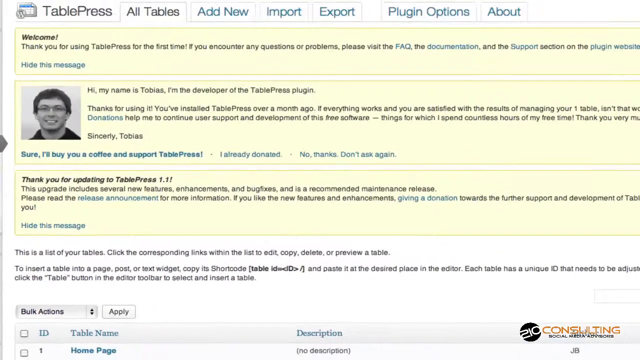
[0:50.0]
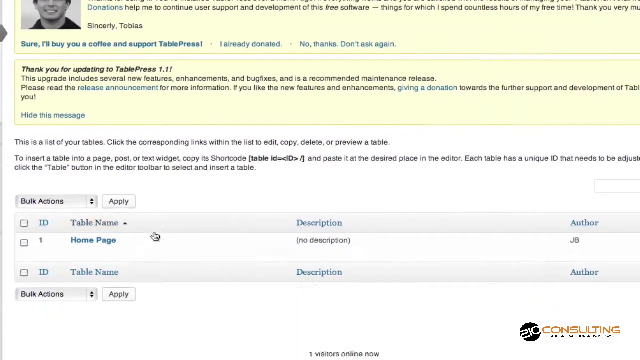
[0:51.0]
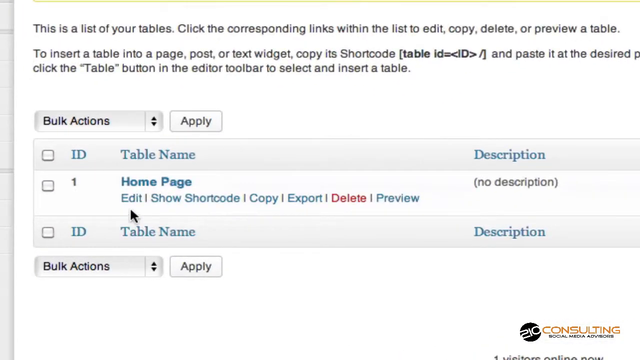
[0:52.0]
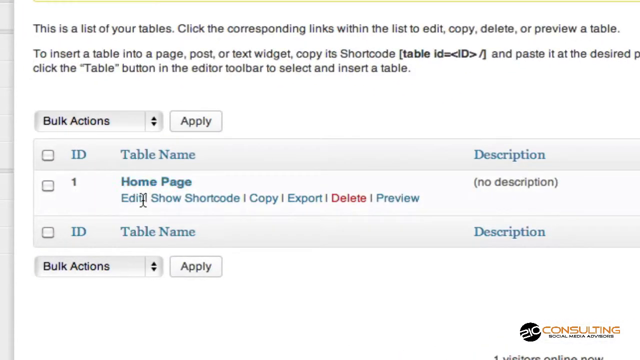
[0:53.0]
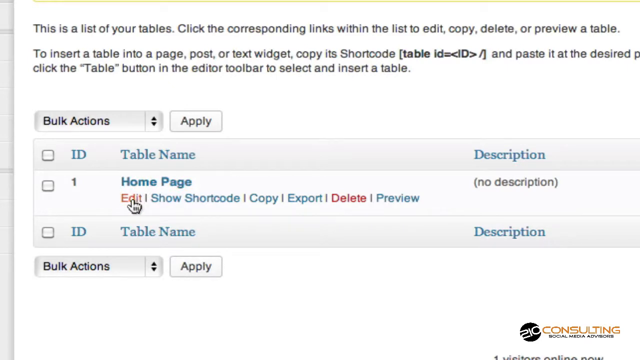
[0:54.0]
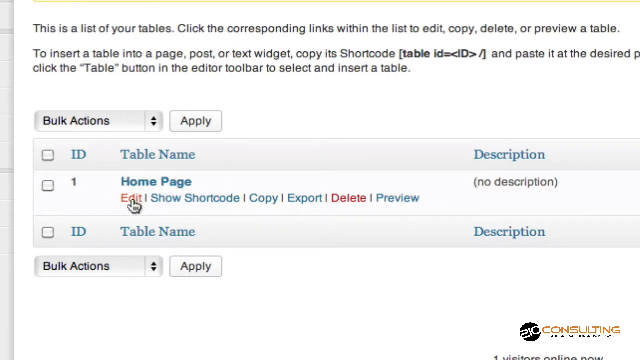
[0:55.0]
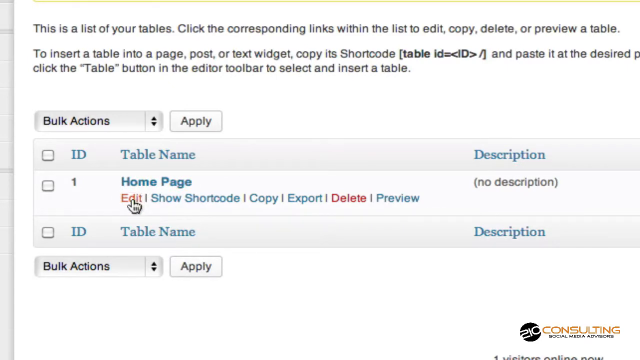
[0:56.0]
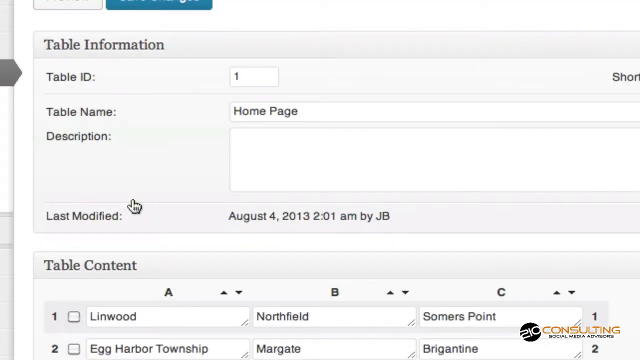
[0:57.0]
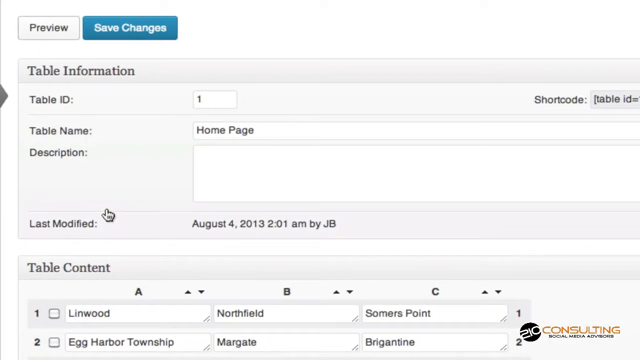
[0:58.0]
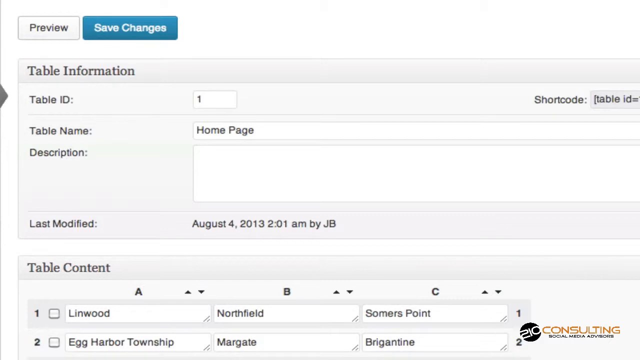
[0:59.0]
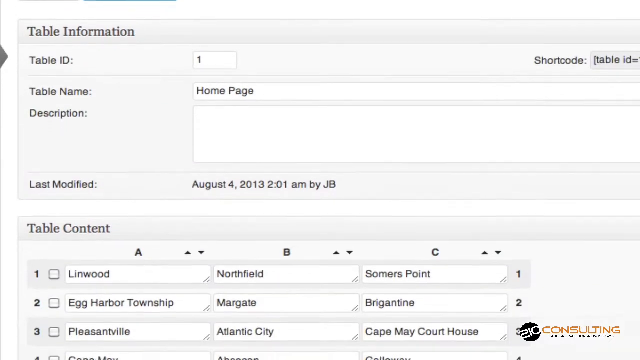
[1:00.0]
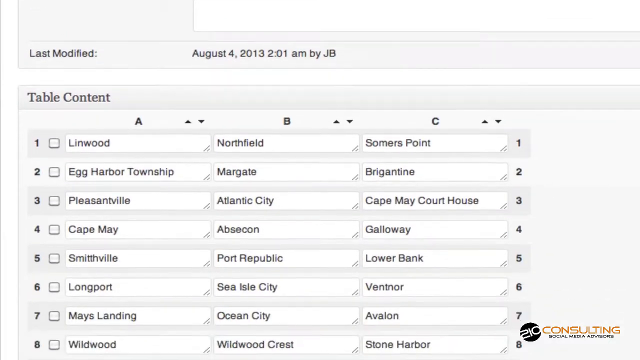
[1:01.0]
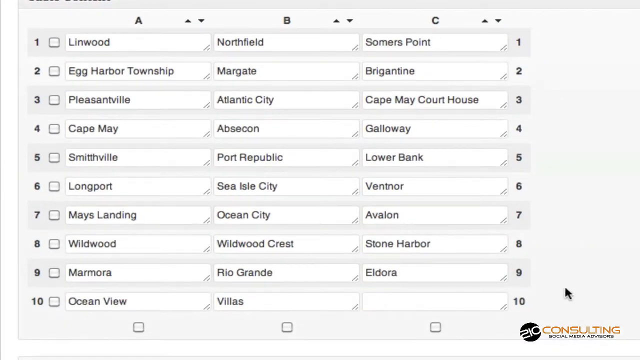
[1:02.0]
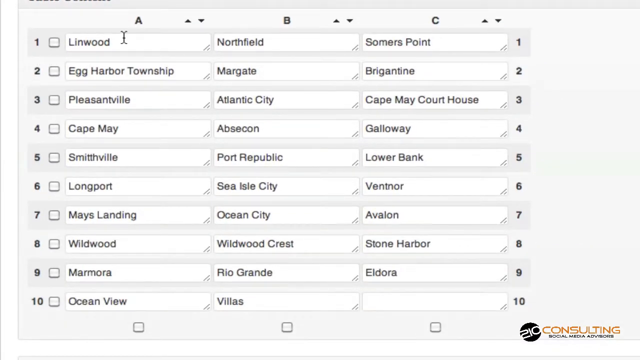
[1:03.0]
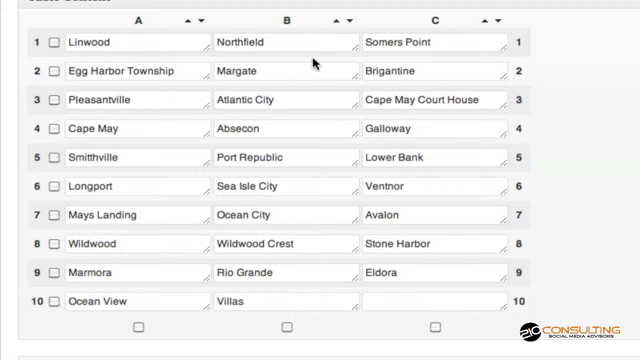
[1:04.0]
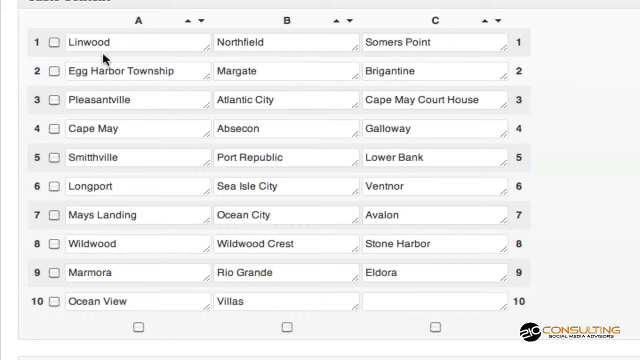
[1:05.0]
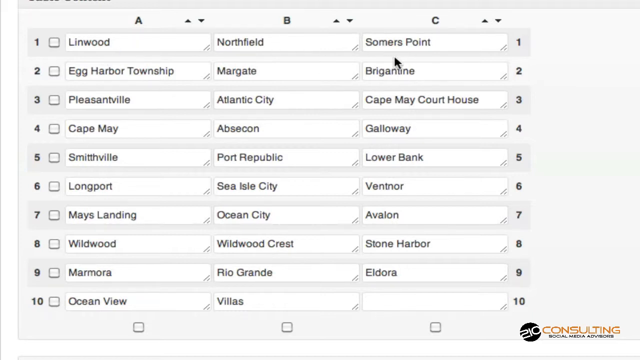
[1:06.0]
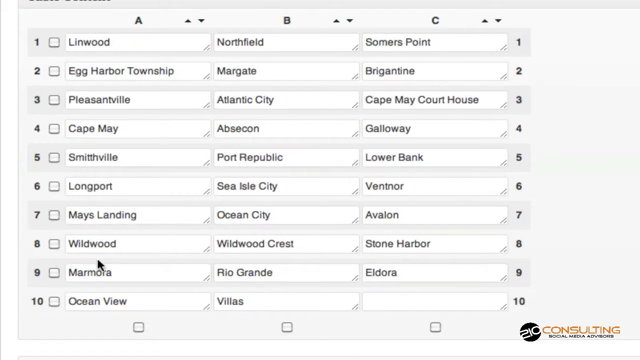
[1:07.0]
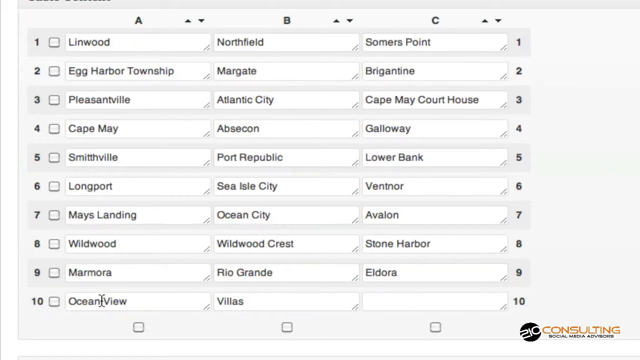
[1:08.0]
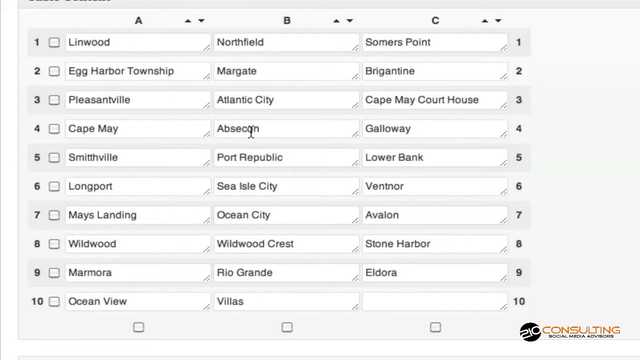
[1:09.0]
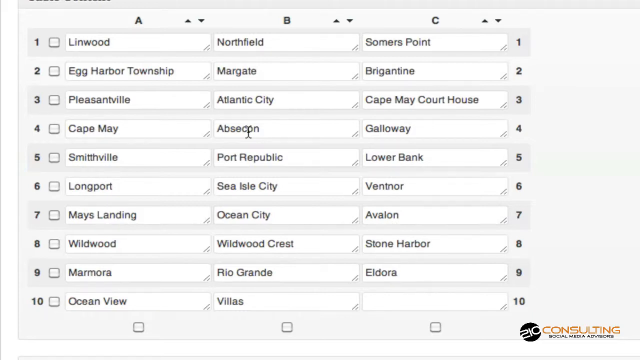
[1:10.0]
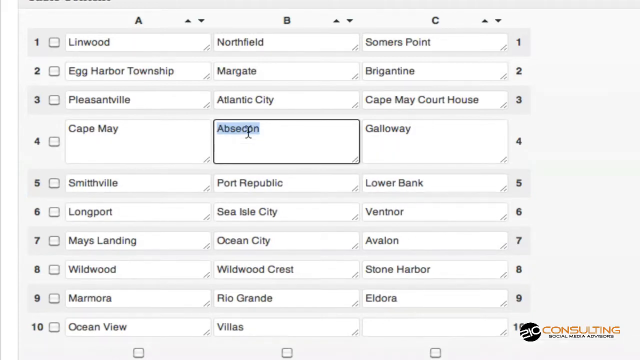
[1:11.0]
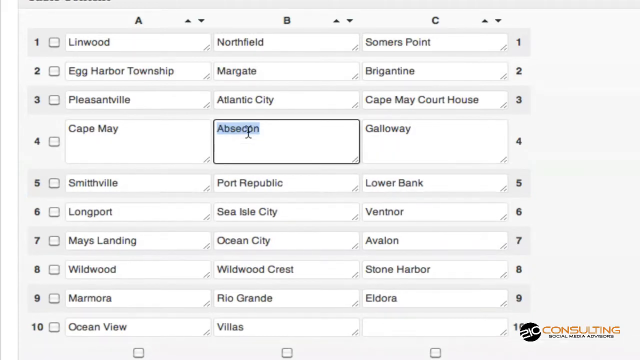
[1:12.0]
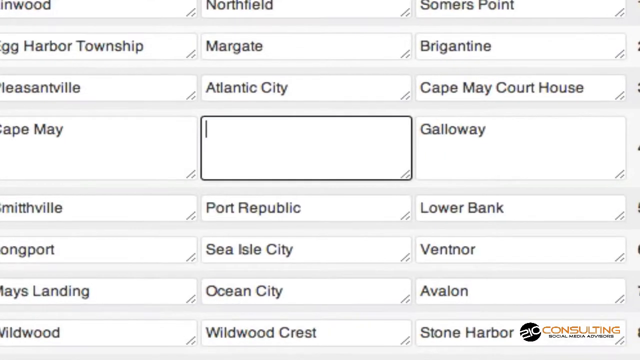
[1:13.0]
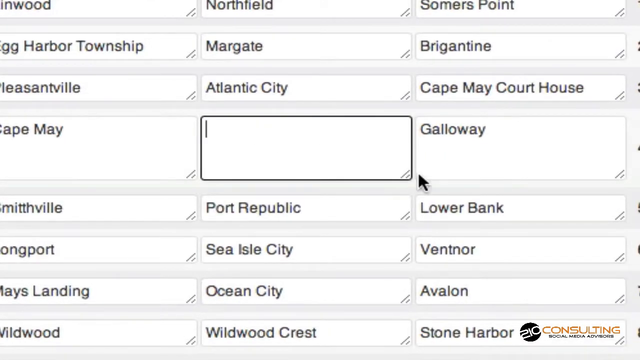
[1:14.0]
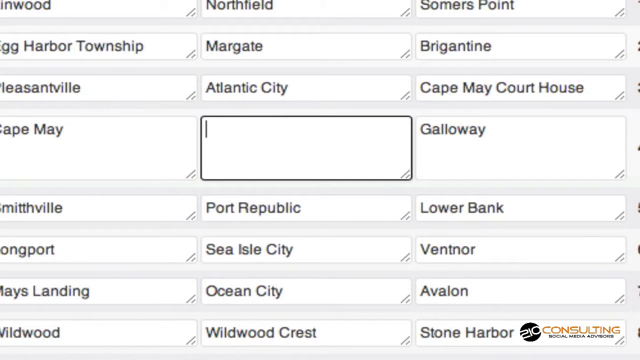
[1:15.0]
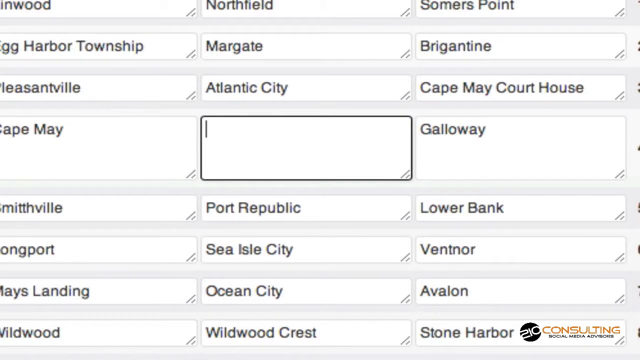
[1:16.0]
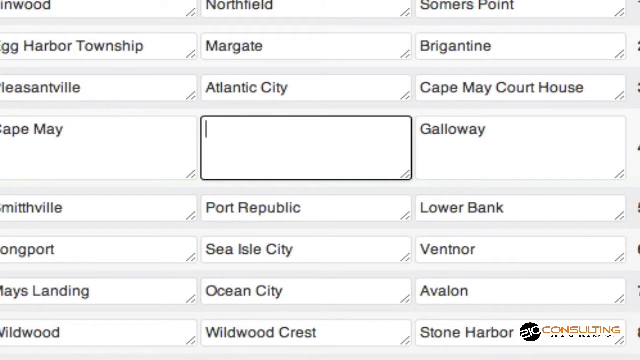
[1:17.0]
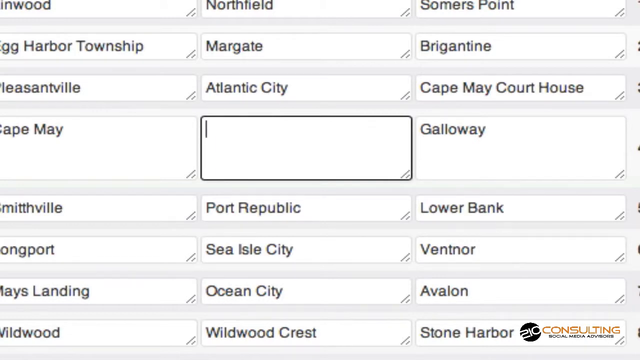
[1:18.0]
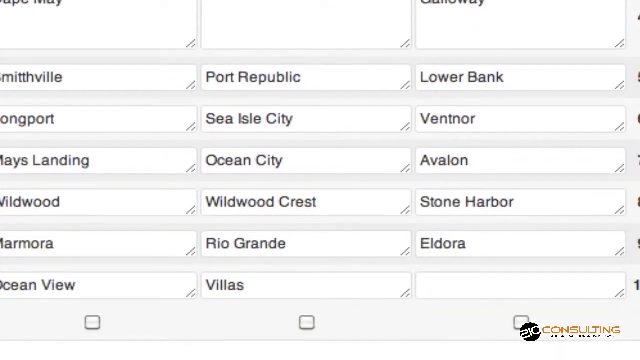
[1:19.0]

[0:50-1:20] A menu at the top reads "TablePress, All Tables, Add New, Import, Export, Plugin, Options, and About". Beneath it are three light yellow rectangular boxes. The top one reads "Welcome, thank you for using TablePress for the first time. If you encounter any questions or problems, please visit the FAQs, the documentation and the support section on the plugin website." Beneath that is a black and white photo of a young adult male with short dark hair, smiling, wearing wire-rimmed glasses and a dark polo-style shirt. Next to it is a bio that reads "Hi, my name is Tobias. I'm the developer of the TablePress plugin." The next yellow box says "Thank you for updating to TablePress one." Beneath that, on a white screen, it states "This is a list of your tables" and advises clicking the corresponding links to edit, copy, delete, or preview a table. The user scrolls down to the list of tables, shown as blue clickable hyperlinks, briefly highlights home page, and clicks edit, which leads to a new screen. The buttons Preview and Save Changes are at the top, and the table information window has been collapsed; it has a table ID number, a table name, a description, and the date it was last modified. Beneath that is the table content, a list of cities. The cursor moves around the screen before clicking on ABSECON, which becomes highlighted in blue and is deleted. The user then scrolls down.